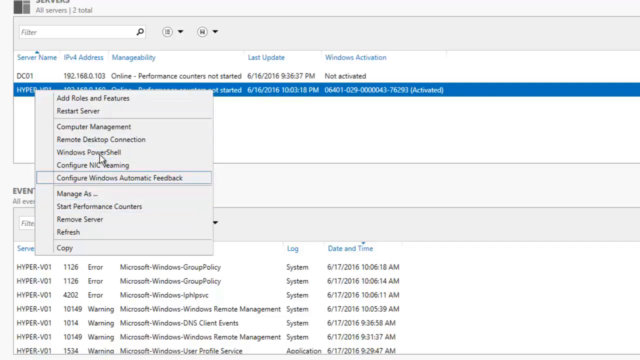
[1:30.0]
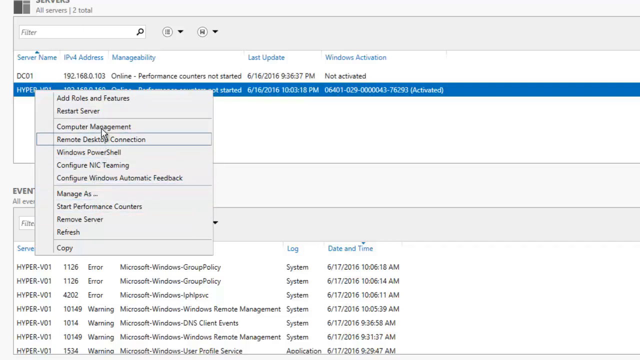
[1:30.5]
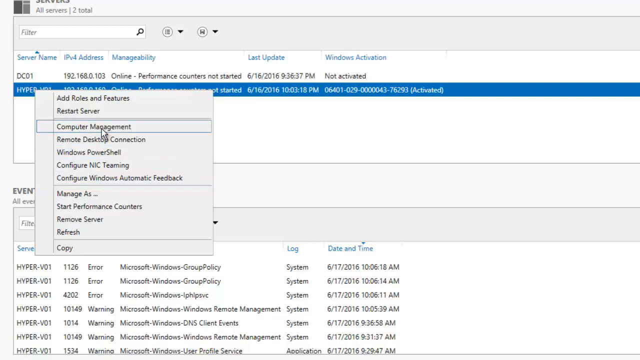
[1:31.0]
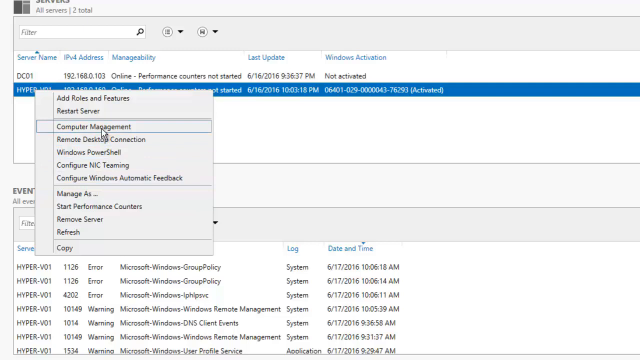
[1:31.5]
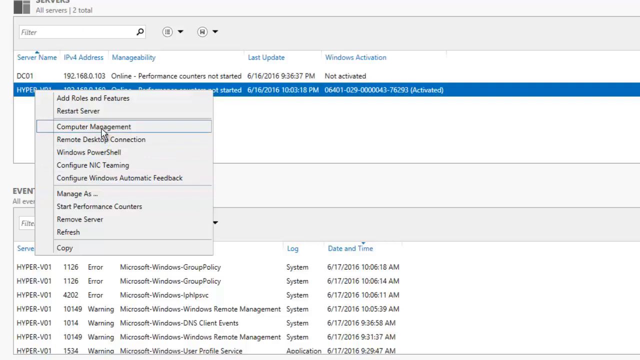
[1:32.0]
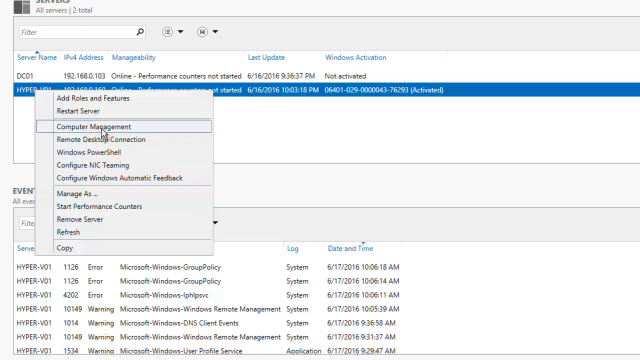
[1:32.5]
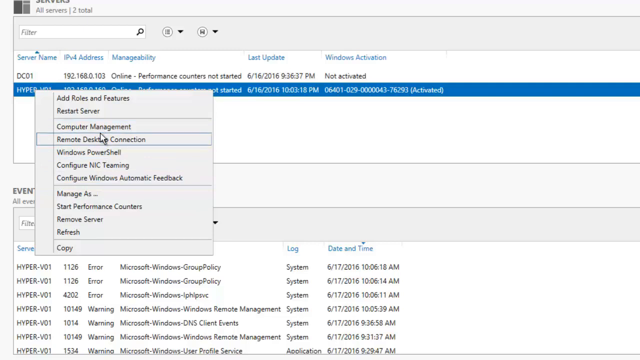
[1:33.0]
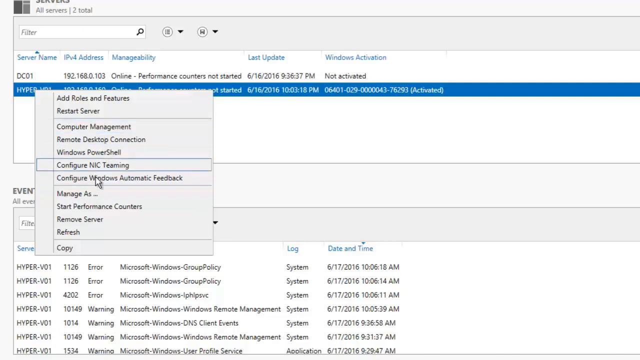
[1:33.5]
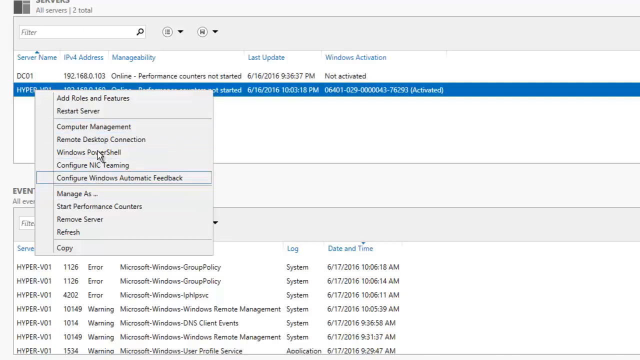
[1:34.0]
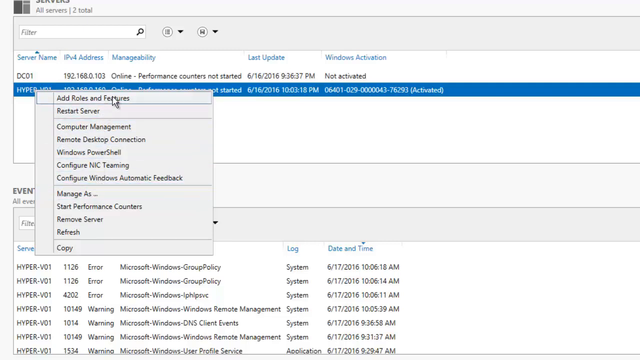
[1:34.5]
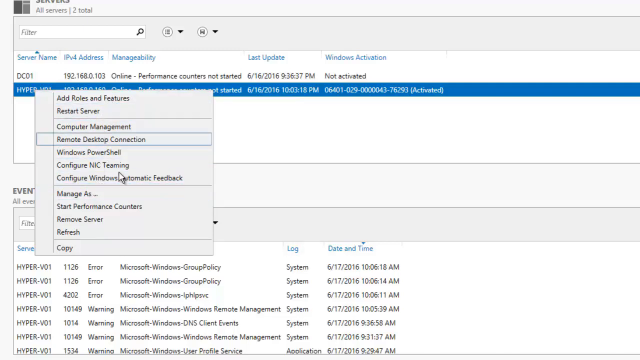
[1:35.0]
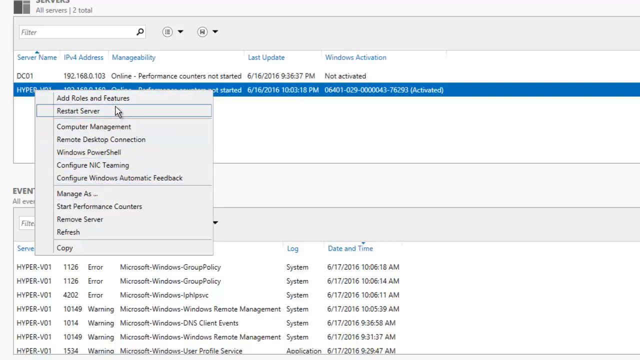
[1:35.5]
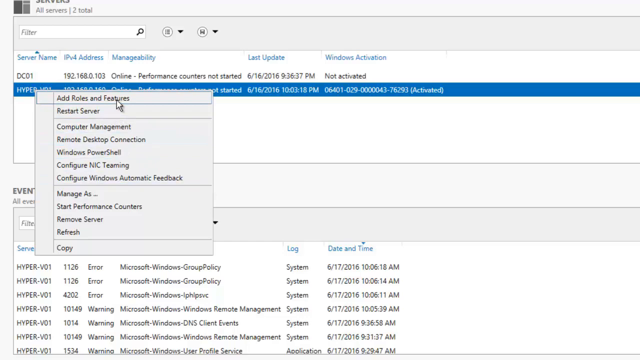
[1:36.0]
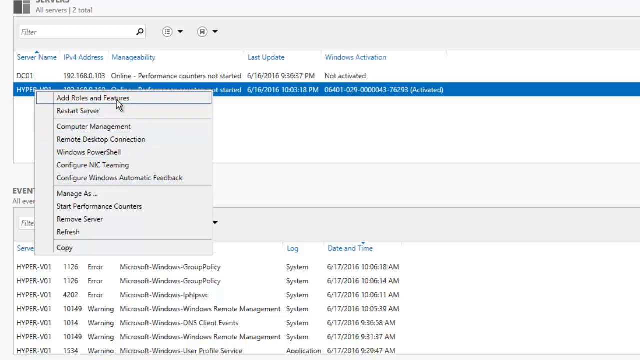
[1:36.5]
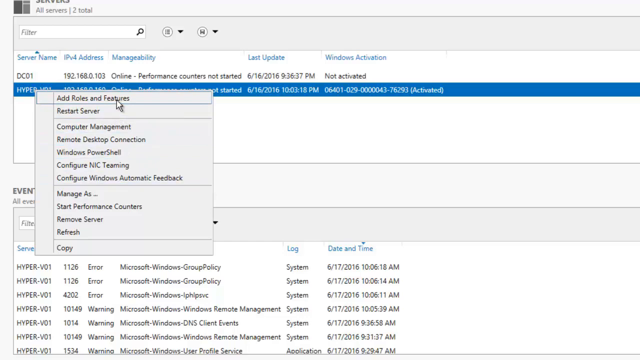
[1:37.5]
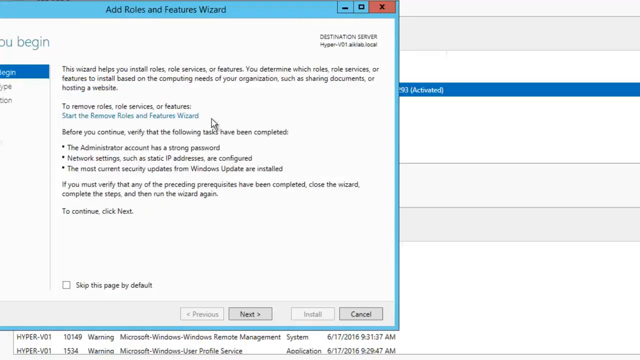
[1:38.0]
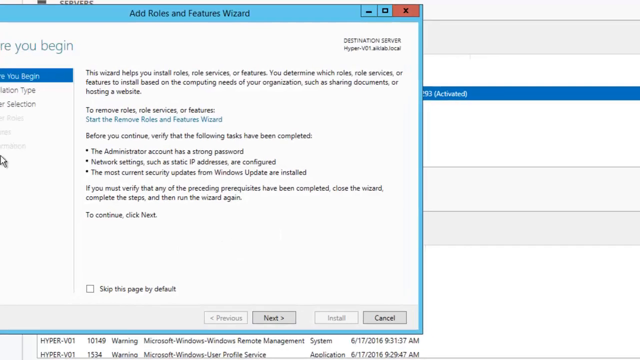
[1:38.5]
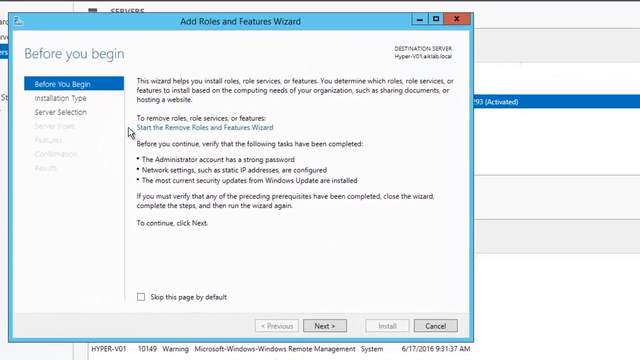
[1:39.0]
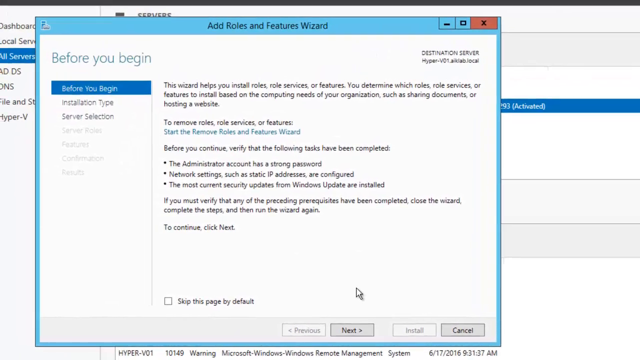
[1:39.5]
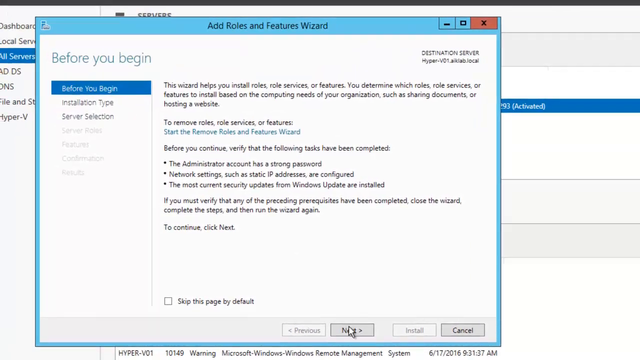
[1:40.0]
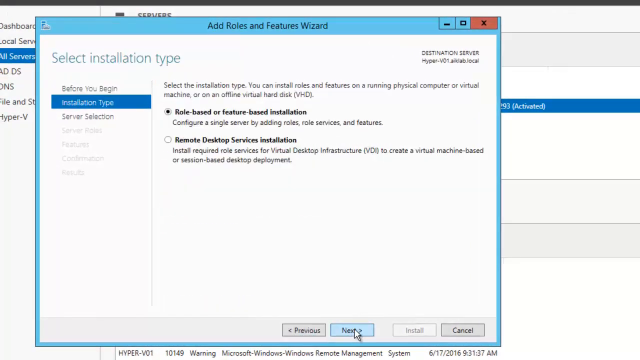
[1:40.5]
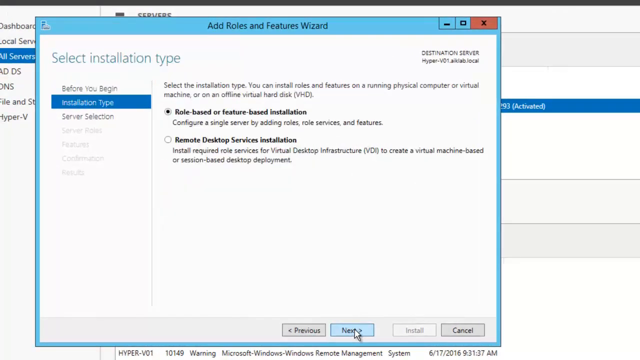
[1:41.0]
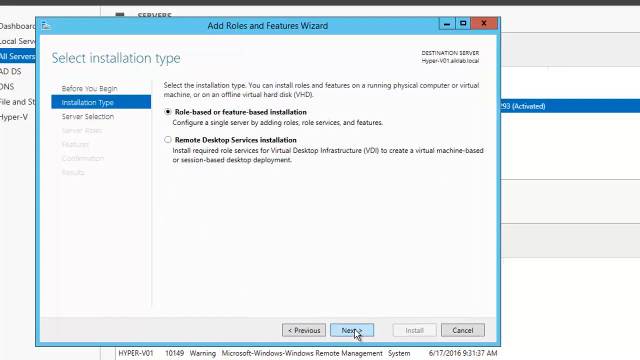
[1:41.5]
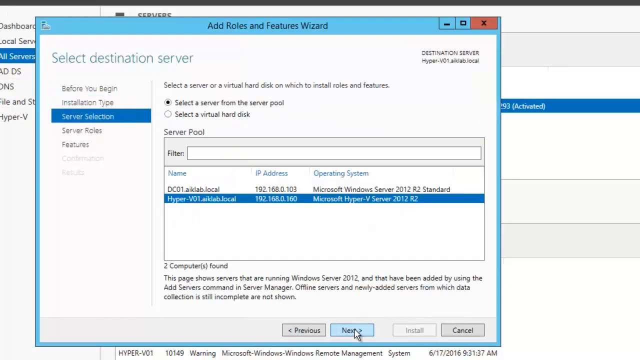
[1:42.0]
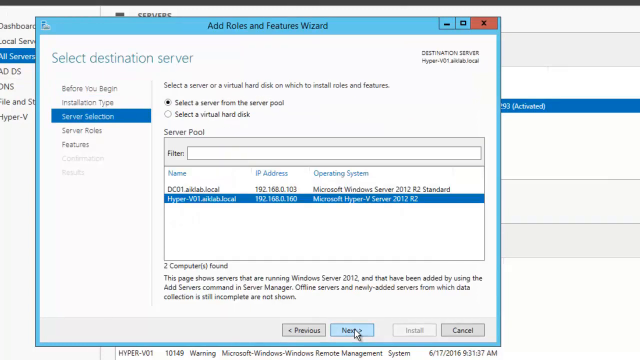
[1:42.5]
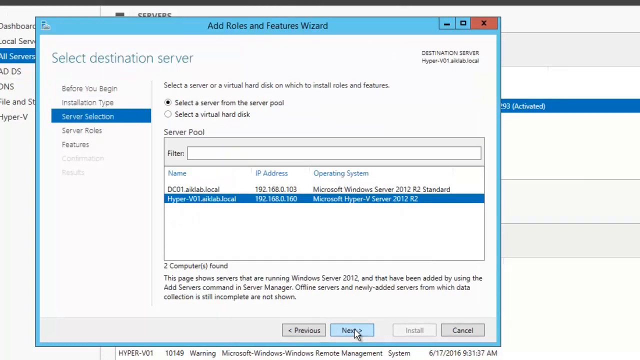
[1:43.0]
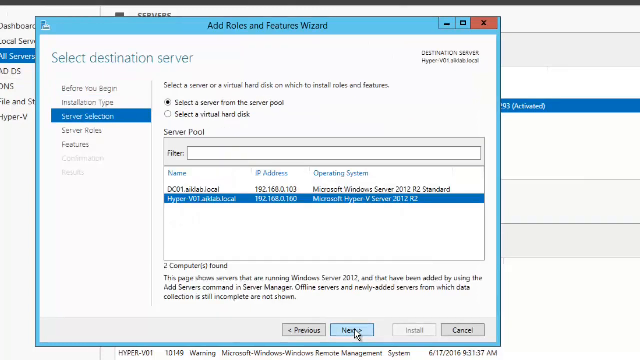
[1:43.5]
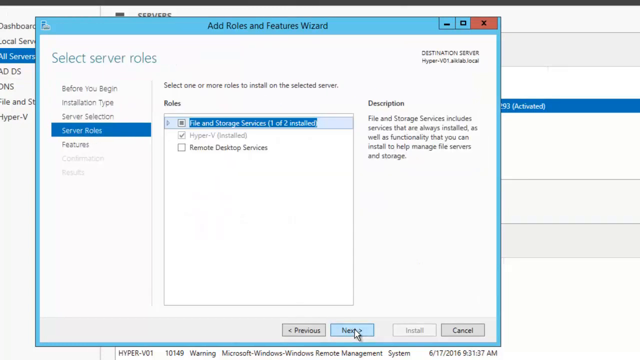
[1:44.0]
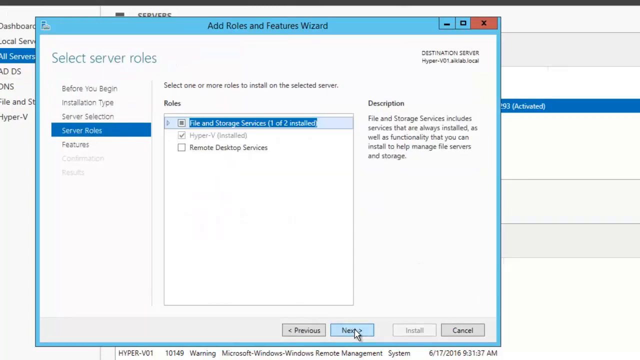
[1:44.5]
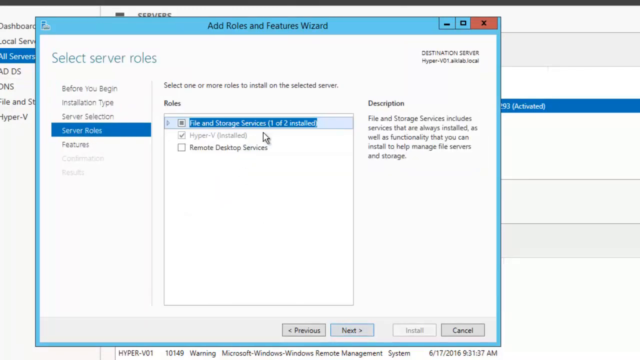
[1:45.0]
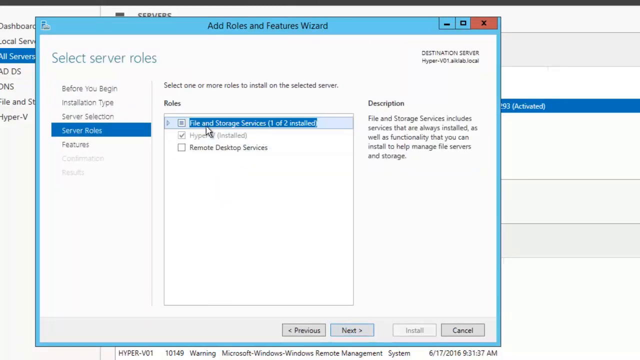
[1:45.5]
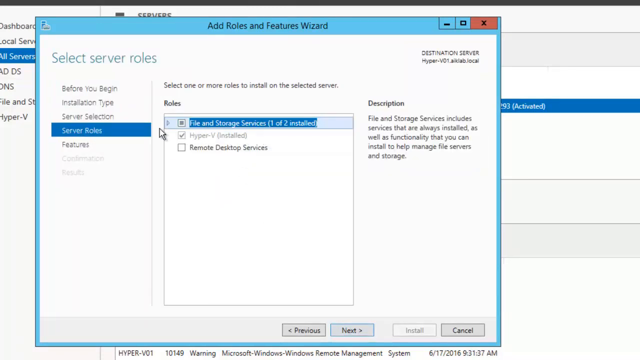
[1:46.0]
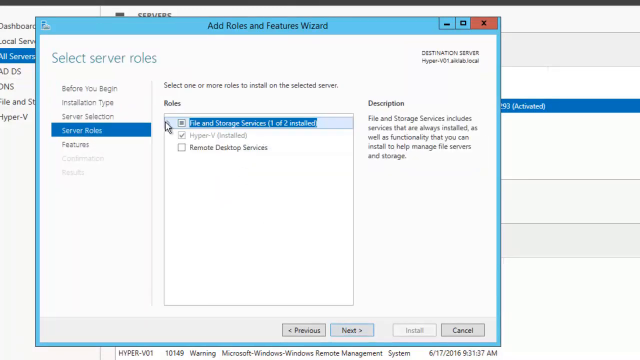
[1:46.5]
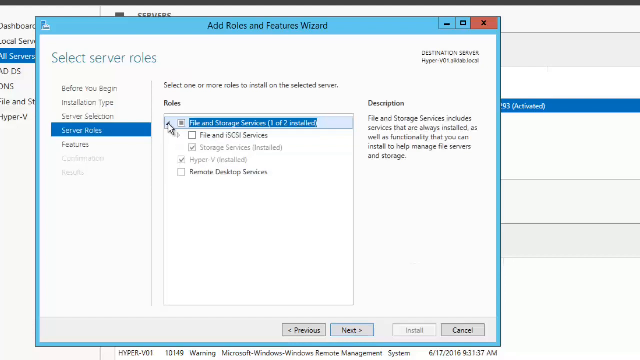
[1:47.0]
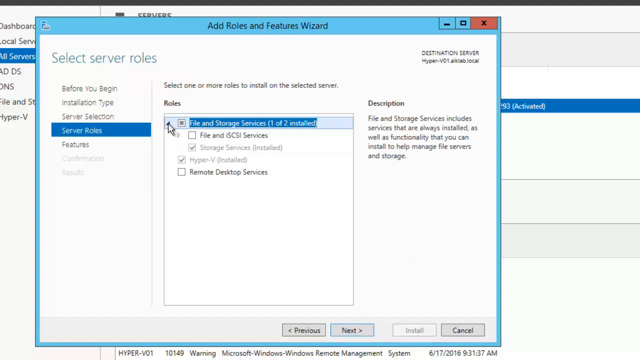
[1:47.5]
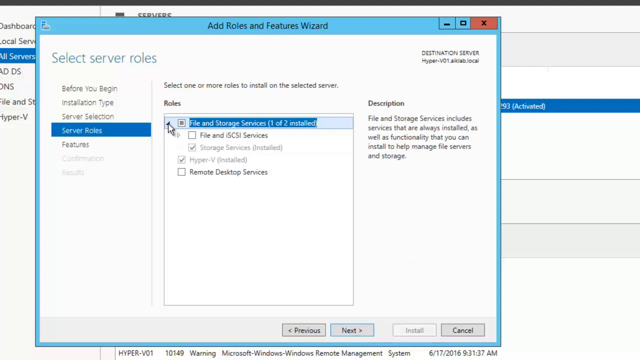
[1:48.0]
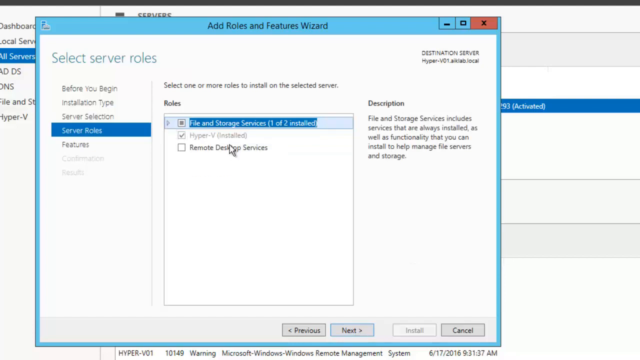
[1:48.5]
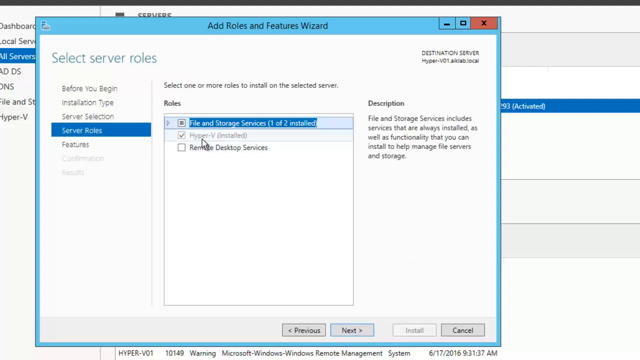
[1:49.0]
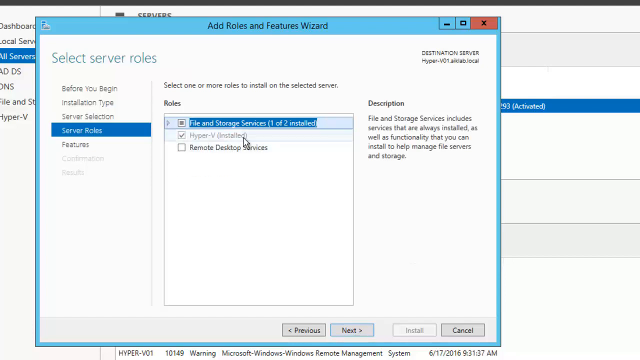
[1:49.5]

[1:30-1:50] On the servers page, the user has opened the right-click menu under the server name Hyper and looks through its options. An Add Roles and Features Wizard dialog box then pops up, with server selection selected and highlighted in blue in the left menu. The Hyper V01 server, the one just added, is selected, and the user clicks Next in the lower right corner. A new dialog window appears with several options, including Files and Storage Services highlighted in blue. In the options tree on the left, Server Roles is highlighted in blue, and to the right under Roles, Files and Storage Services (one of two installed) is highlighted in blue. The user then goes down and looks at the selected options.